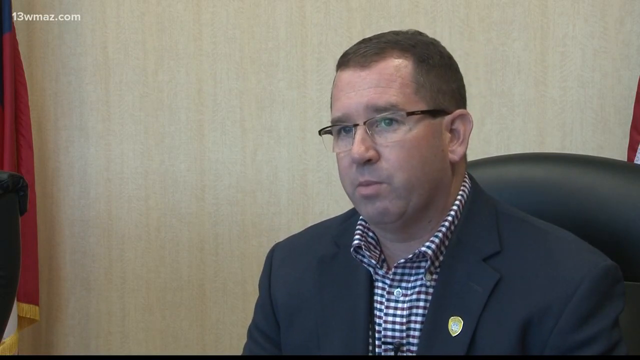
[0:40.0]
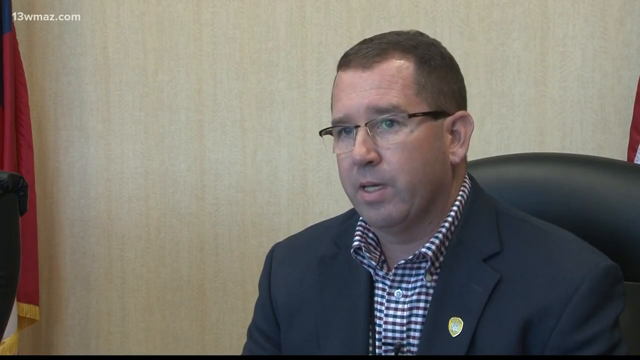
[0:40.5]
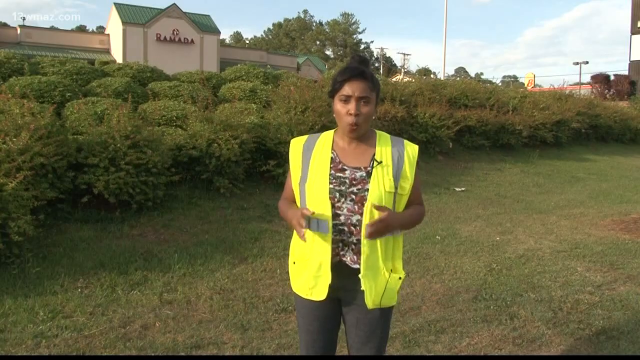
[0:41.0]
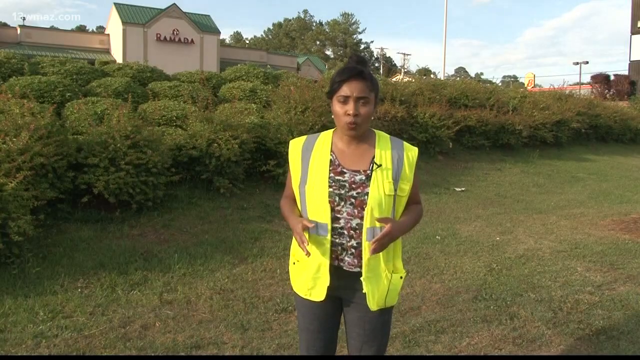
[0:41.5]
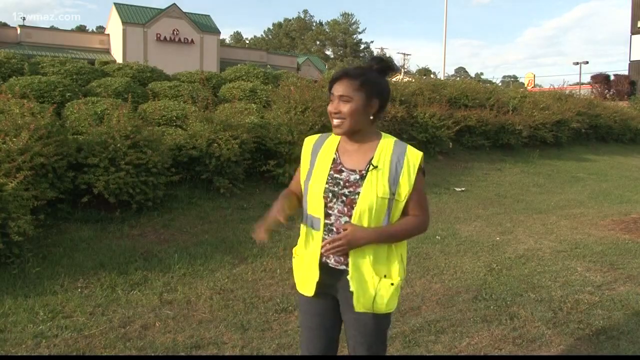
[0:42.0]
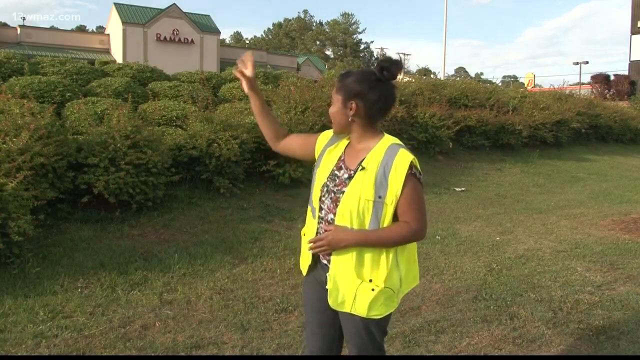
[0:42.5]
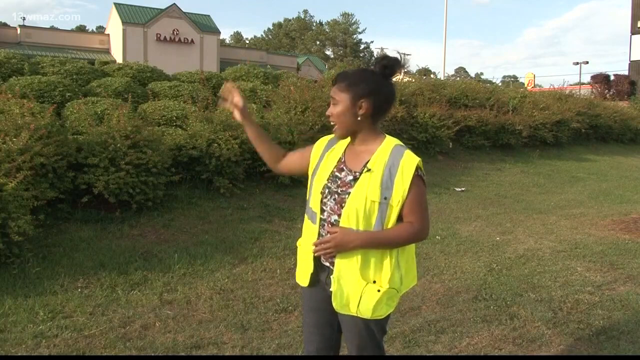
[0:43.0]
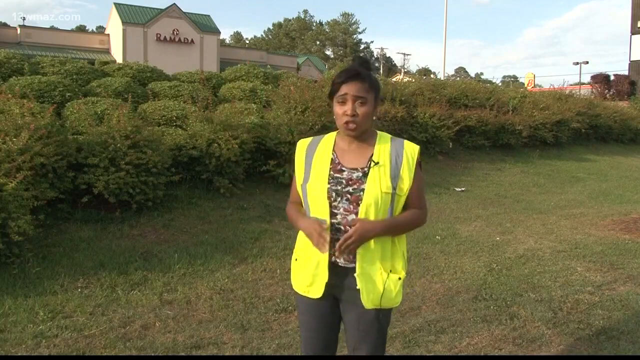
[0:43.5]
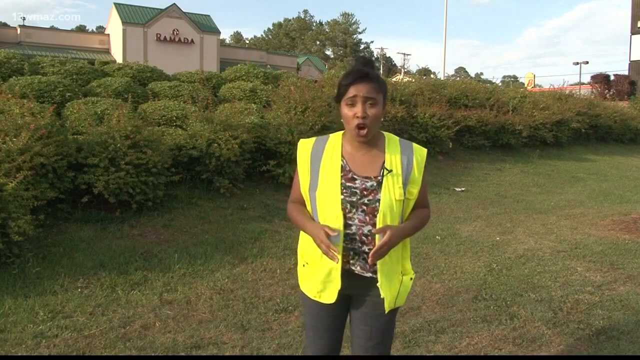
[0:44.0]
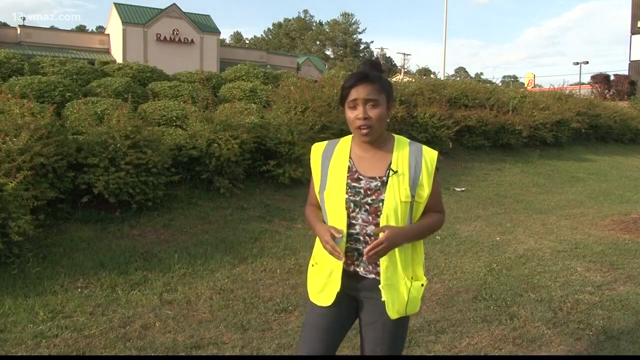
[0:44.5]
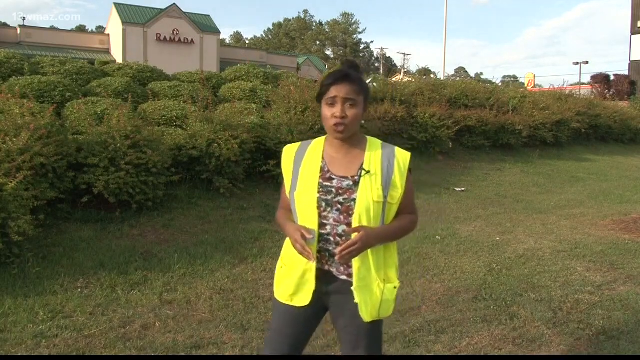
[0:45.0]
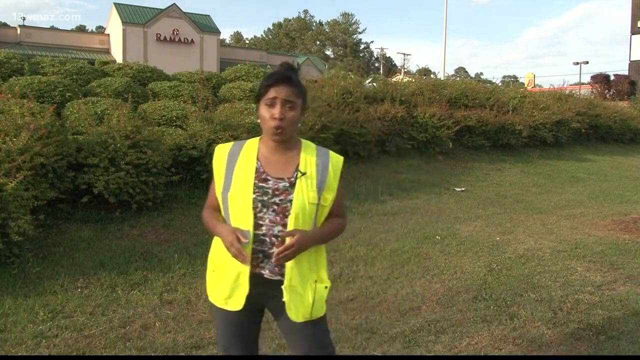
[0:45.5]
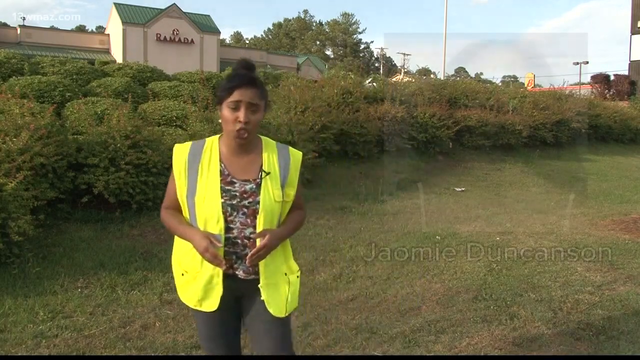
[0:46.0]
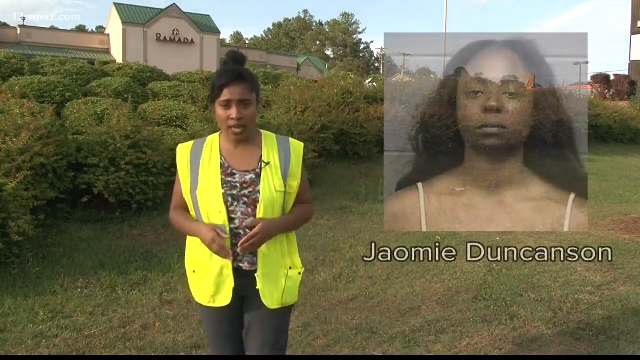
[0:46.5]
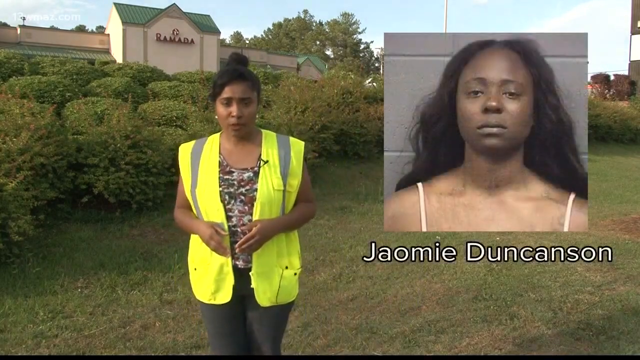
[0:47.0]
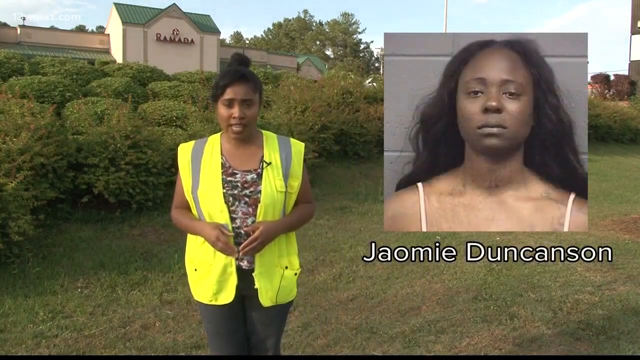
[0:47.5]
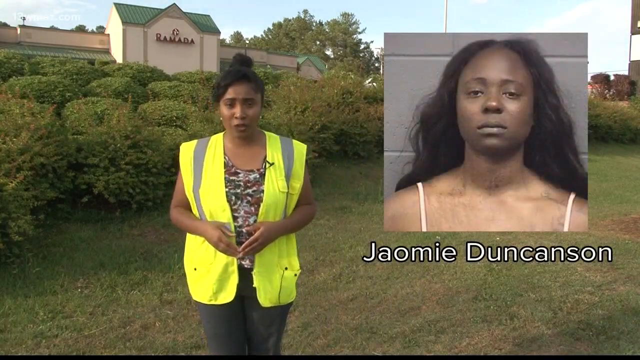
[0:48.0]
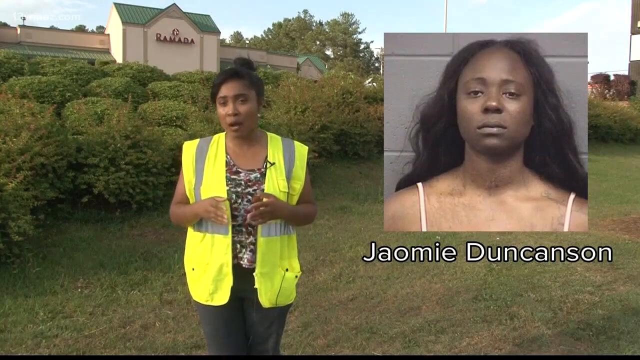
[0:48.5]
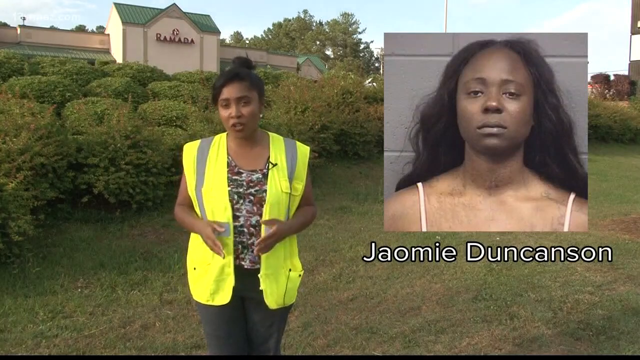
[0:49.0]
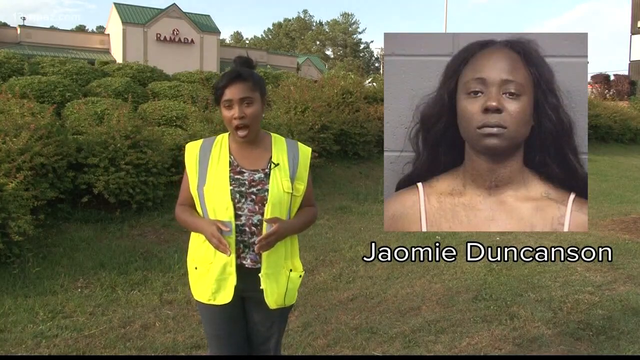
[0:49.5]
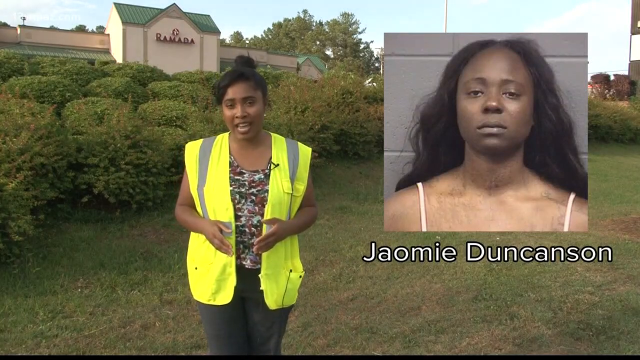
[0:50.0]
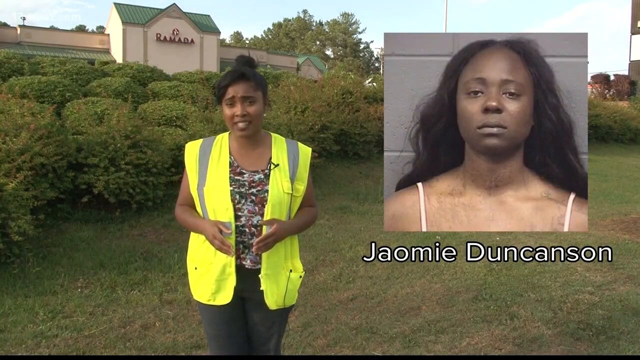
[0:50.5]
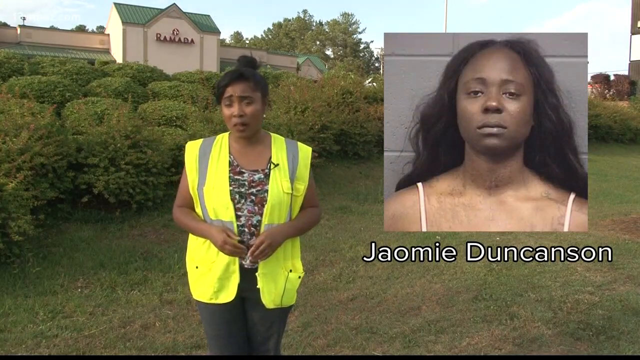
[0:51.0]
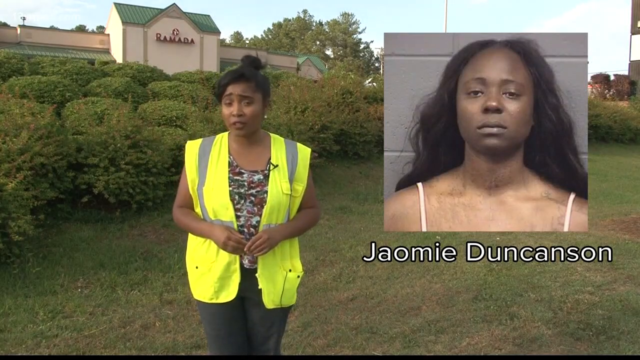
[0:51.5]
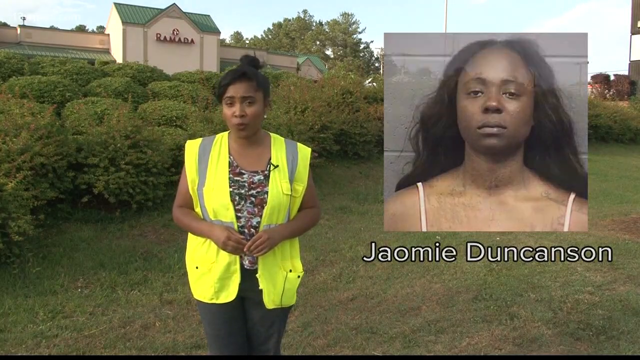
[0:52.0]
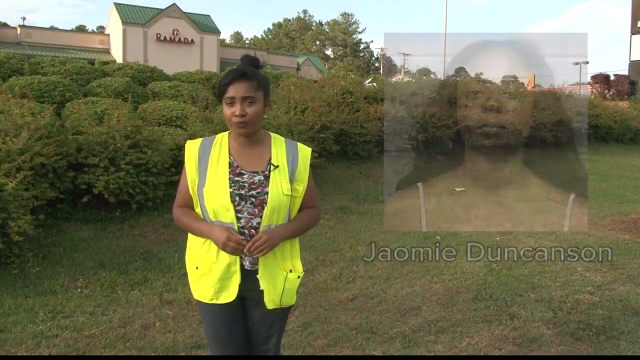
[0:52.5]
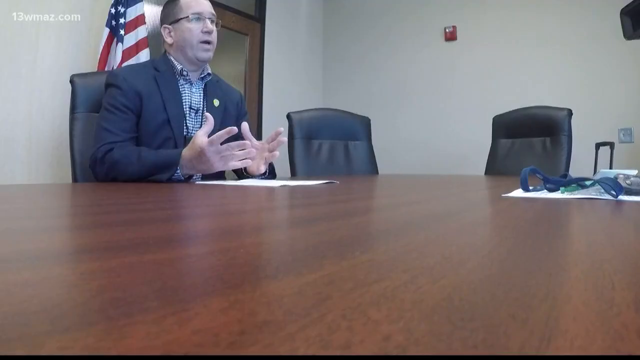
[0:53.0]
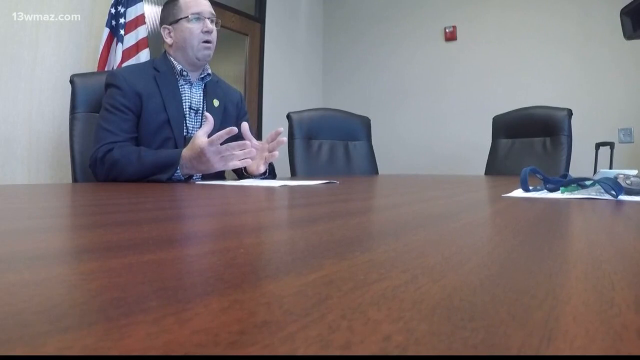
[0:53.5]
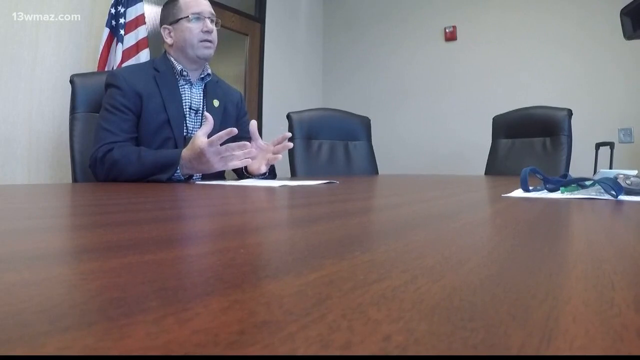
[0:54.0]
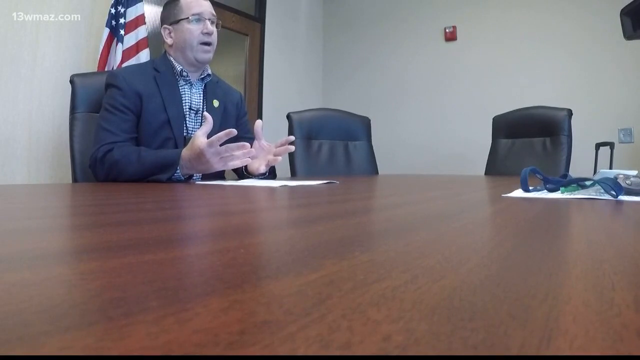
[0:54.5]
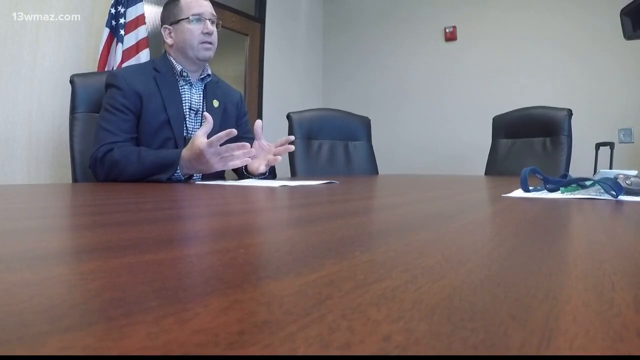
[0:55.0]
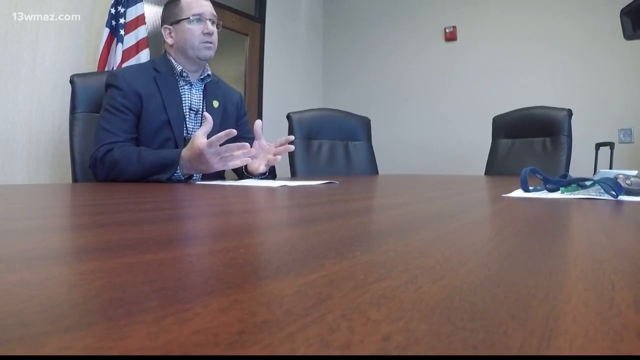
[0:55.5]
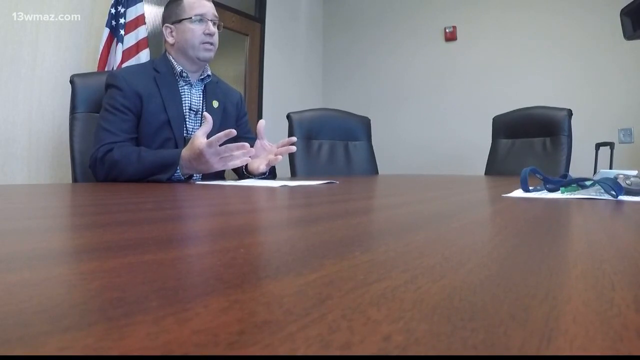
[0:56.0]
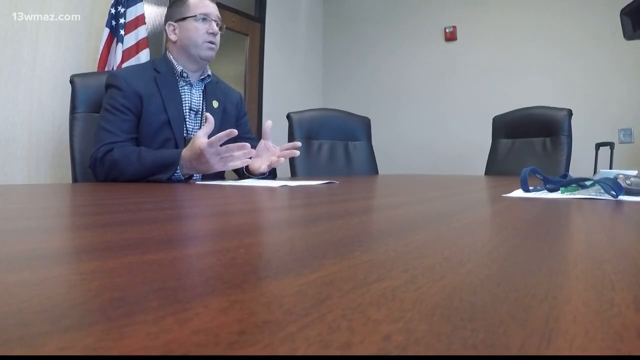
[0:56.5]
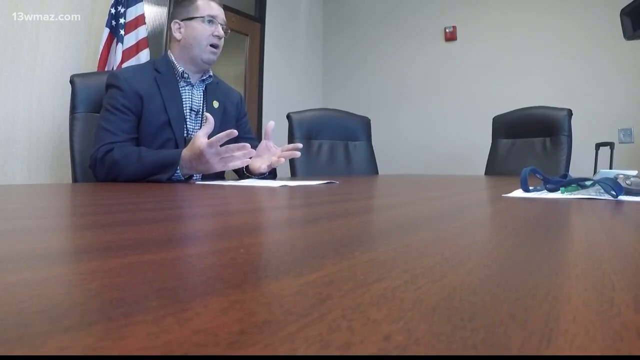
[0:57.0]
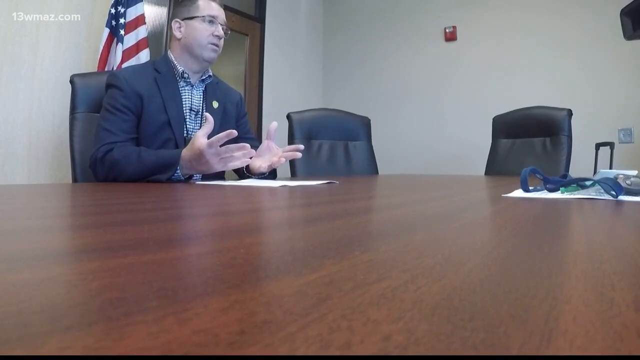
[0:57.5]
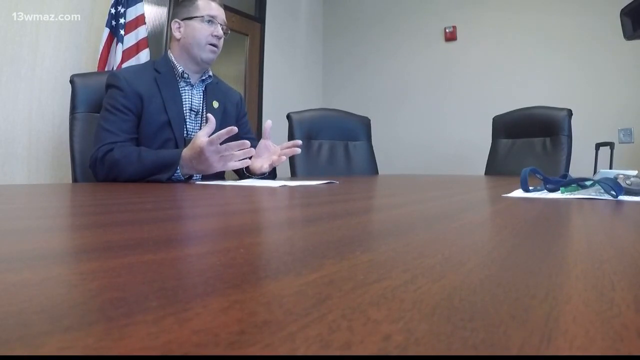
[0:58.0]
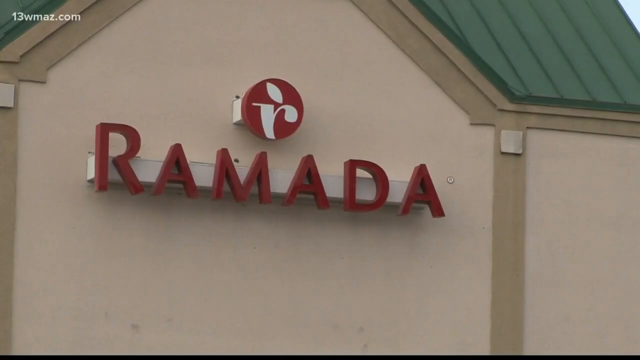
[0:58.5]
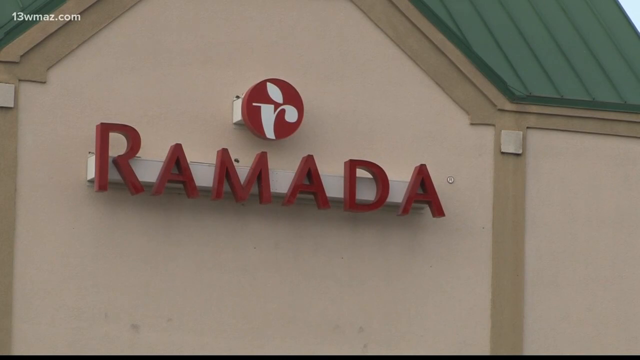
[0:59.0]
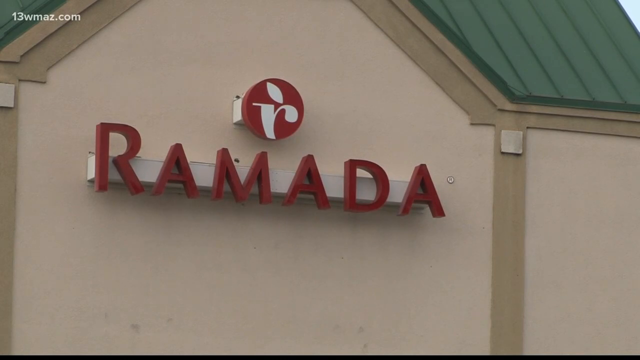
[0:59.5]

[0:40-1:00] A woman wearing a yellow reflector faces the camera. Several green bushes are visible, and in the top left corner there is a green building with a green roof. In the right corner there are several trees, power lines and a partially visible black building. Further from where she is standing is a building with a red roof, and right next to it is what looks like a yellow billboard with the number 8 written on it. Green grass is where the woman is standing, and several trees stand right next to the building. As the woman talks, she moves around, pointing in different directions. A woman then appears in a caption labeled "Jaomi jacanson"; she stands against the camera wearing a sleeveless top and looks very sad in the photo. The speaking woman points at the picture. Next, a man is seated in a conference room with two chairs next to him and a table. Behind him is a United States flag, the walls of the room are white, and slightly behind him there is a door. The view moves on to another place where "Ramada" is written in red on the wall.